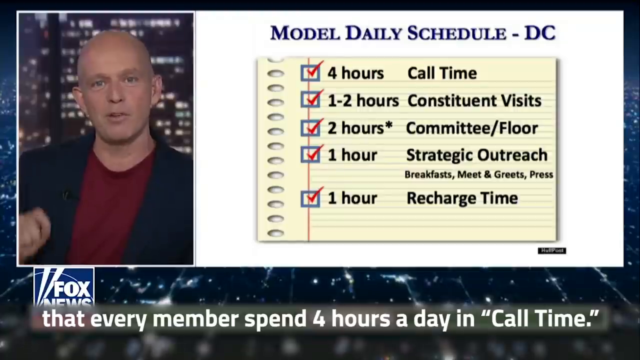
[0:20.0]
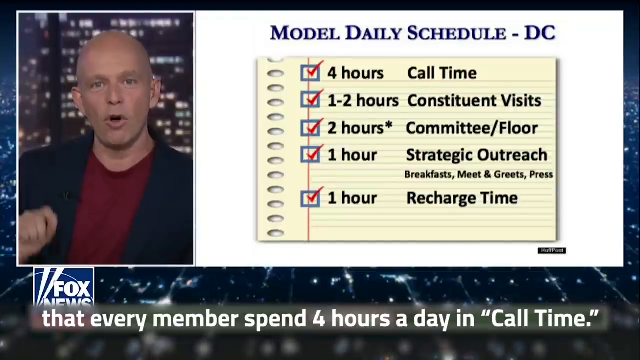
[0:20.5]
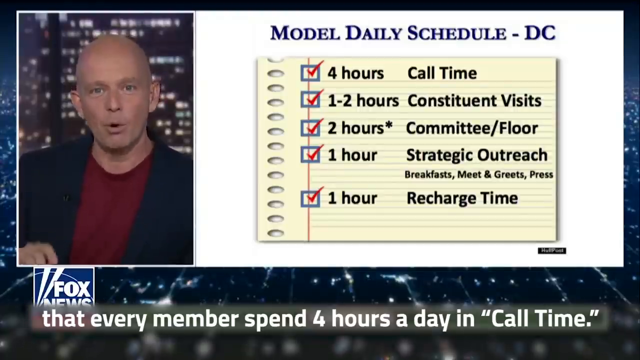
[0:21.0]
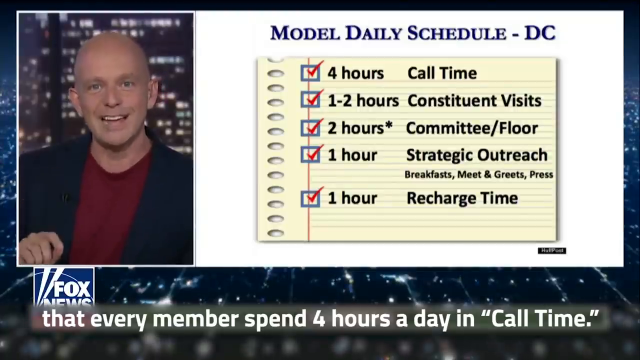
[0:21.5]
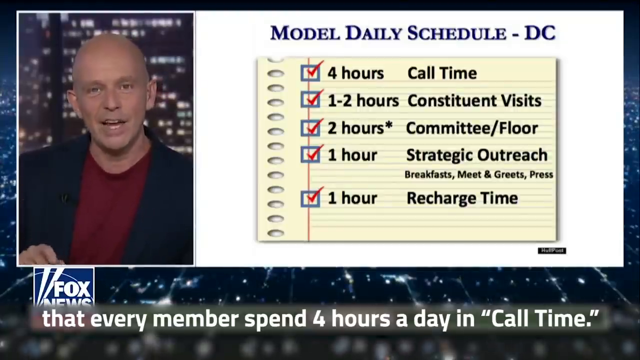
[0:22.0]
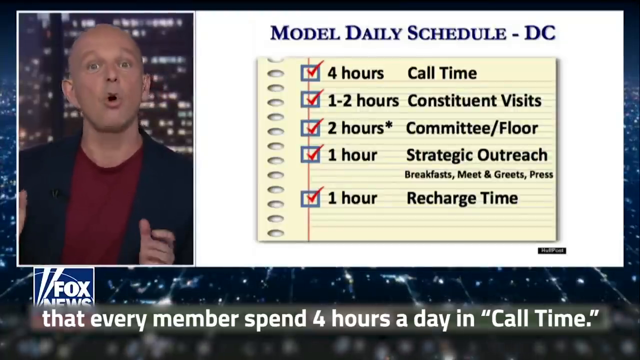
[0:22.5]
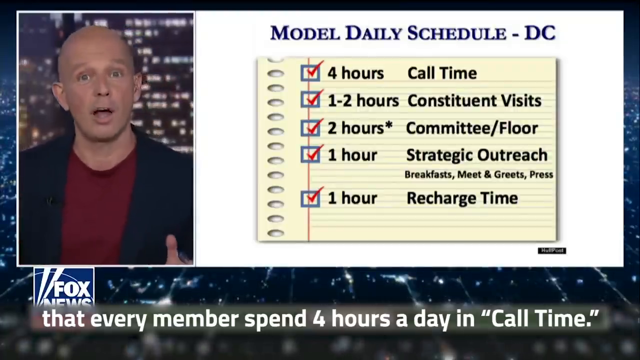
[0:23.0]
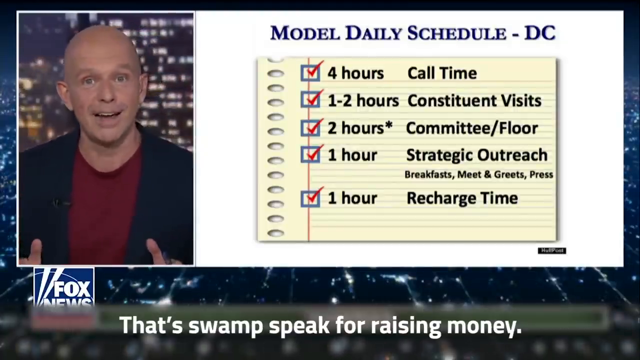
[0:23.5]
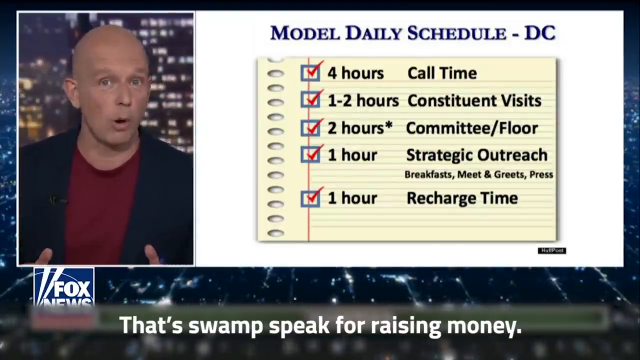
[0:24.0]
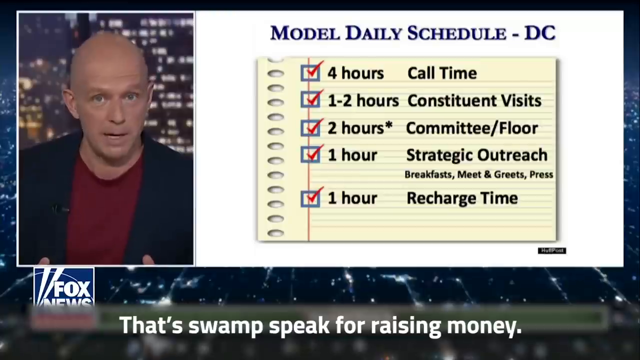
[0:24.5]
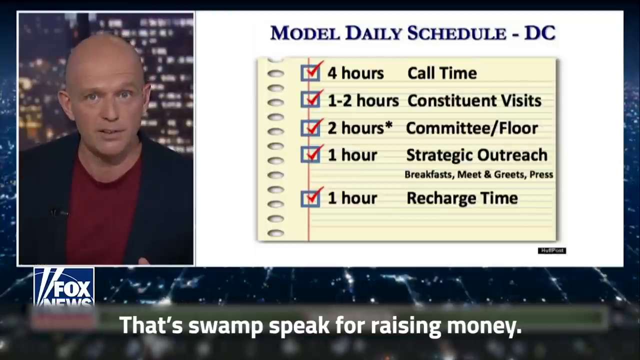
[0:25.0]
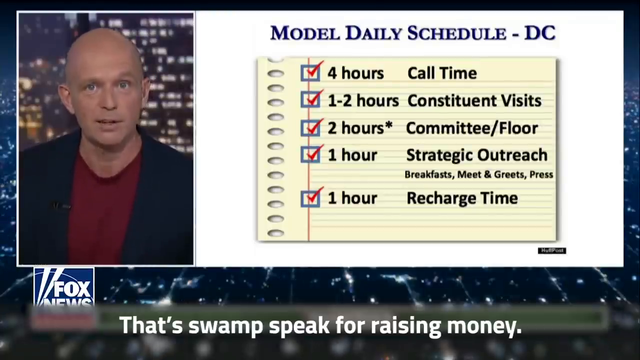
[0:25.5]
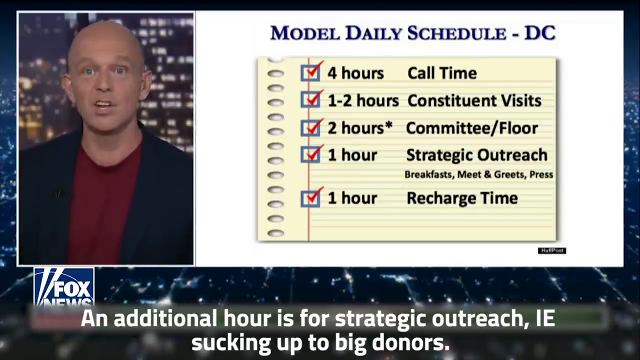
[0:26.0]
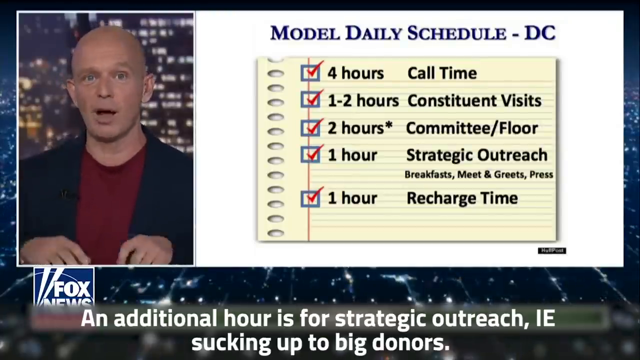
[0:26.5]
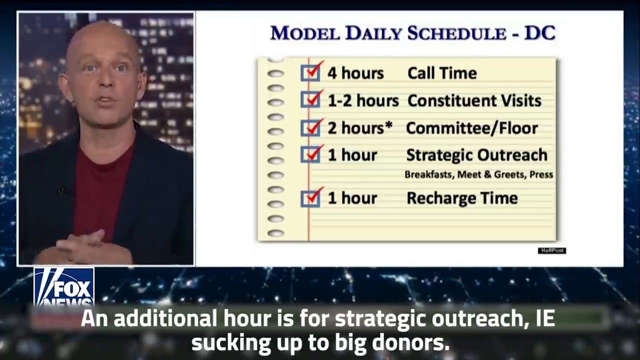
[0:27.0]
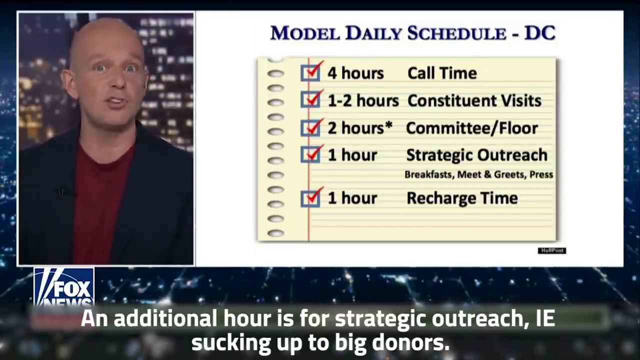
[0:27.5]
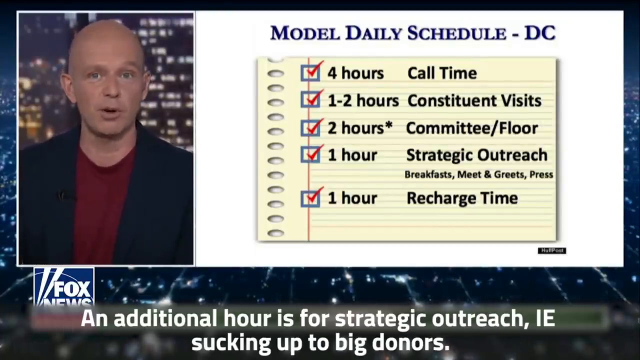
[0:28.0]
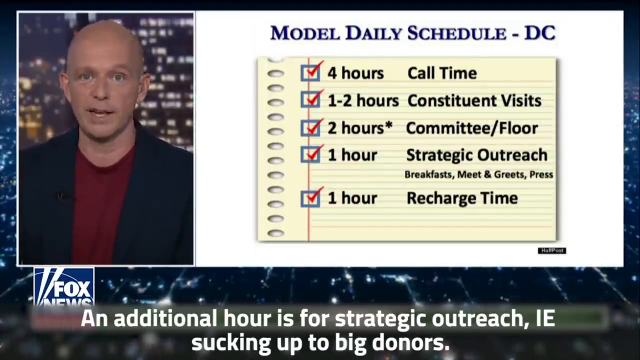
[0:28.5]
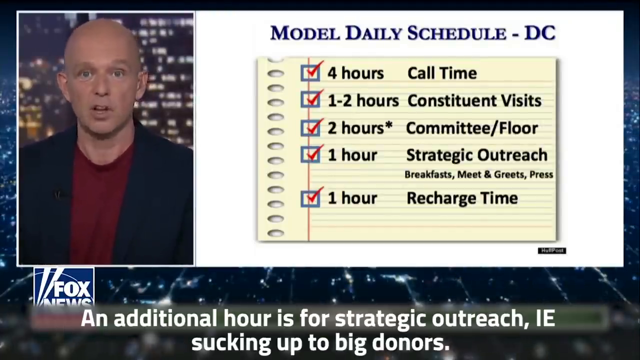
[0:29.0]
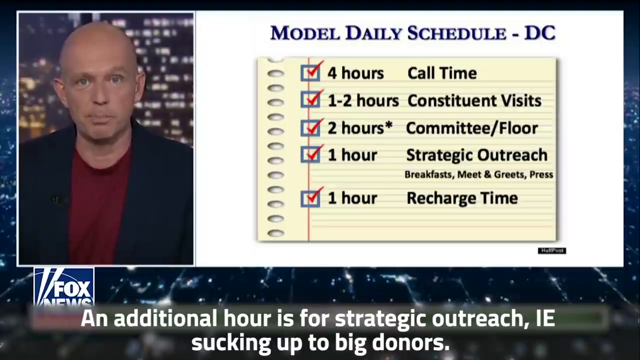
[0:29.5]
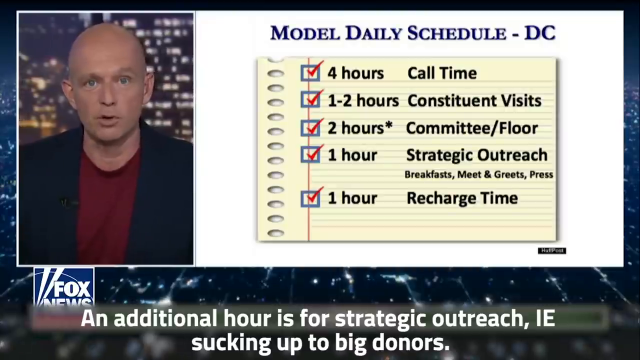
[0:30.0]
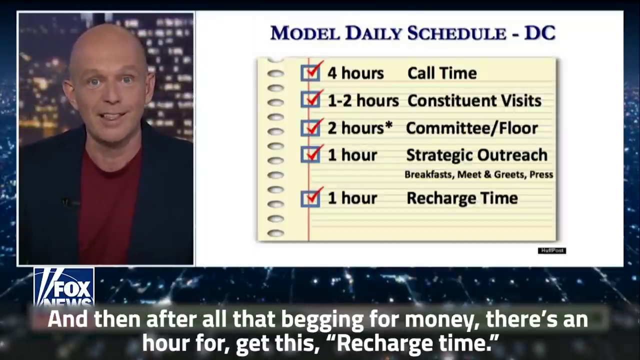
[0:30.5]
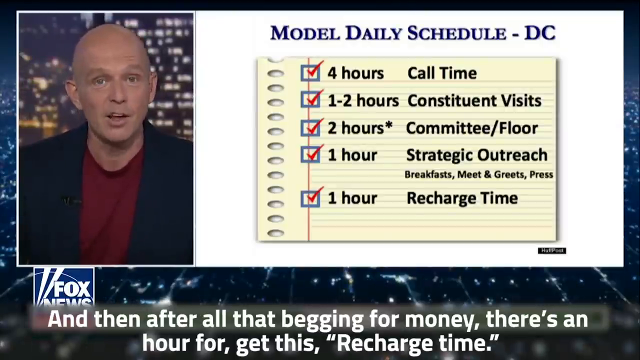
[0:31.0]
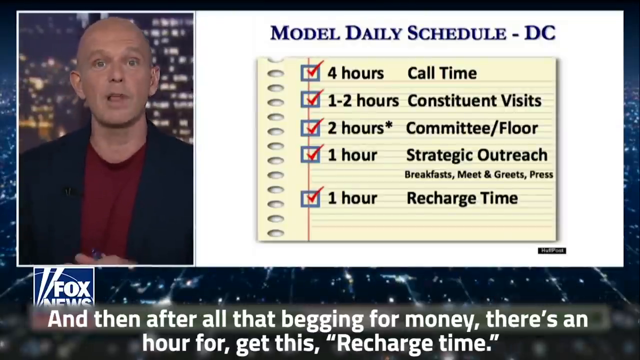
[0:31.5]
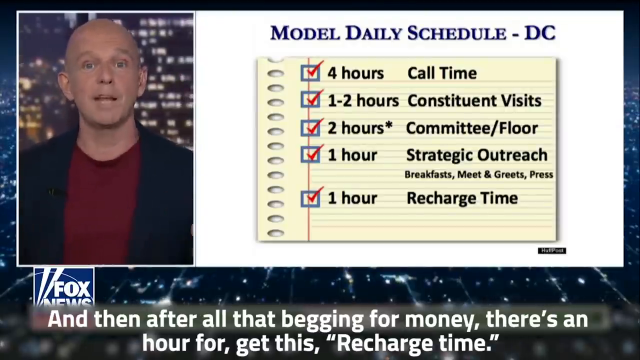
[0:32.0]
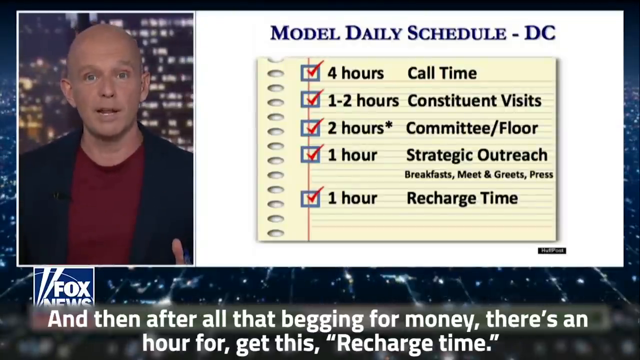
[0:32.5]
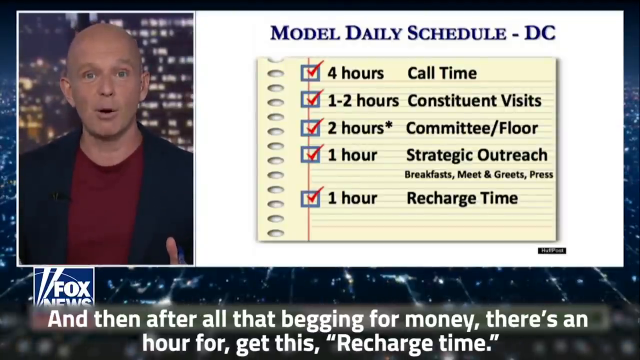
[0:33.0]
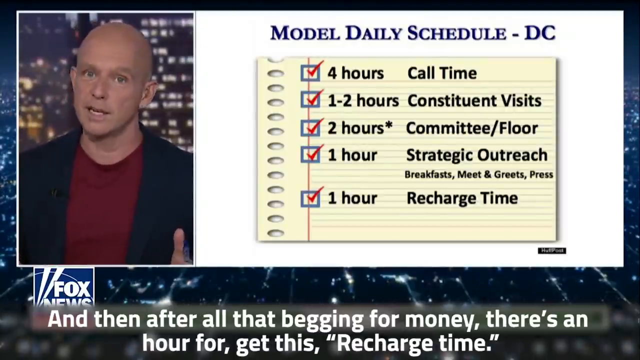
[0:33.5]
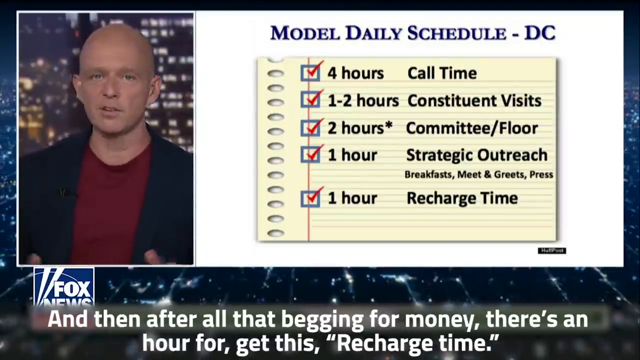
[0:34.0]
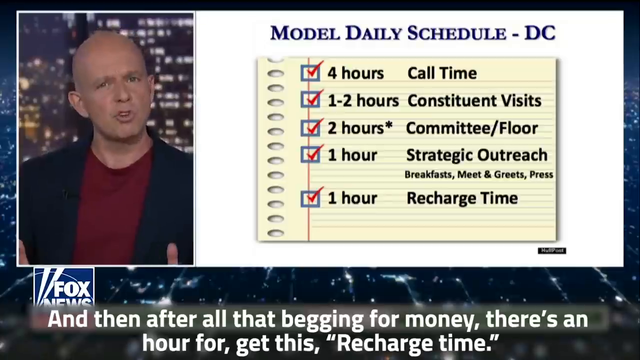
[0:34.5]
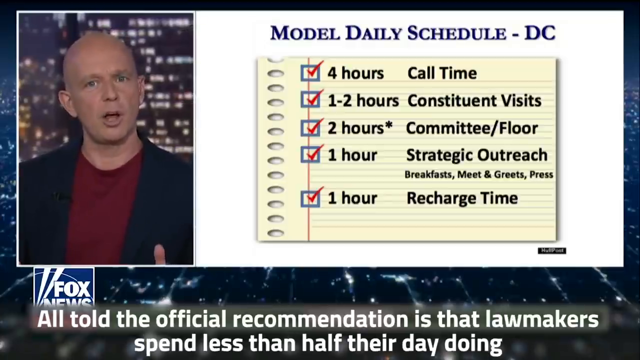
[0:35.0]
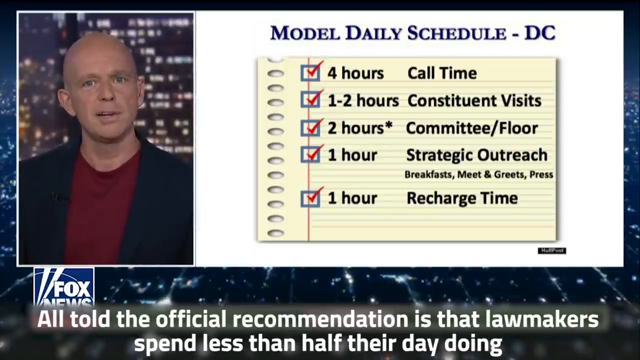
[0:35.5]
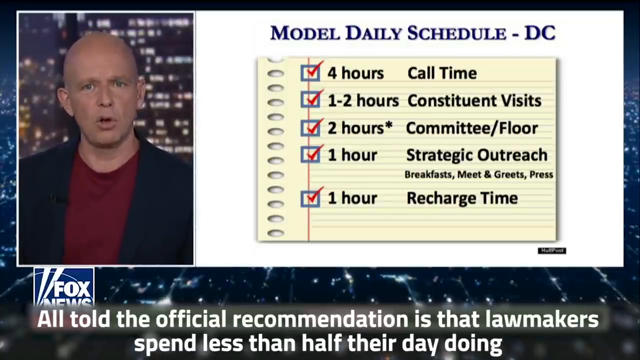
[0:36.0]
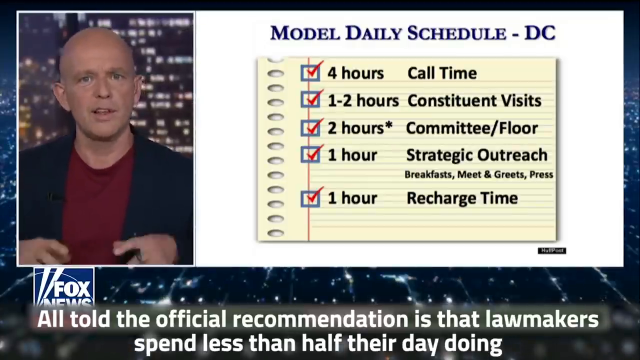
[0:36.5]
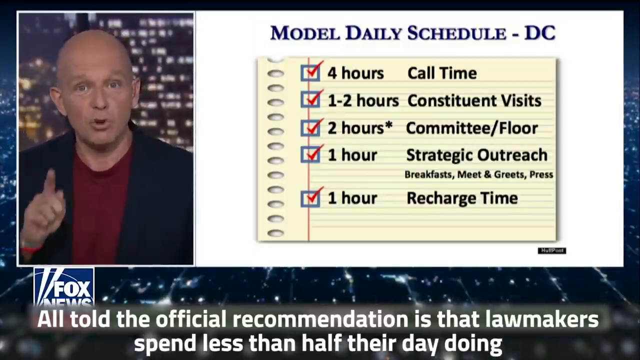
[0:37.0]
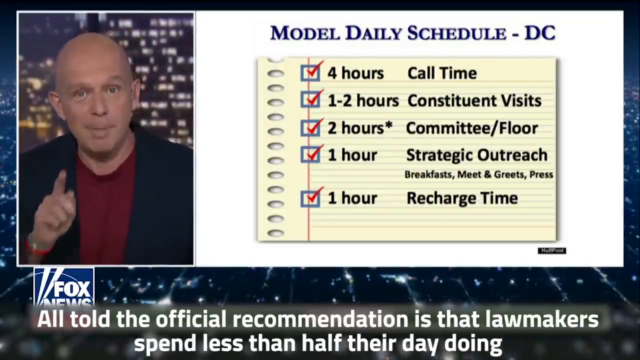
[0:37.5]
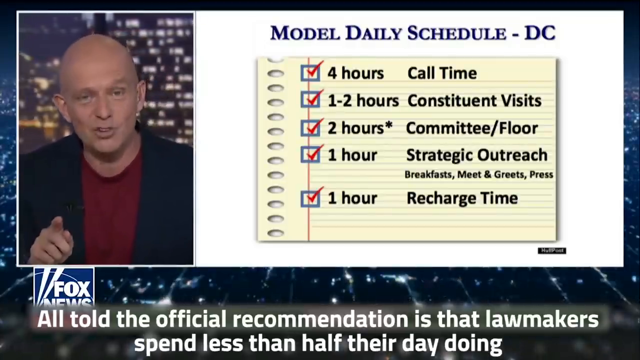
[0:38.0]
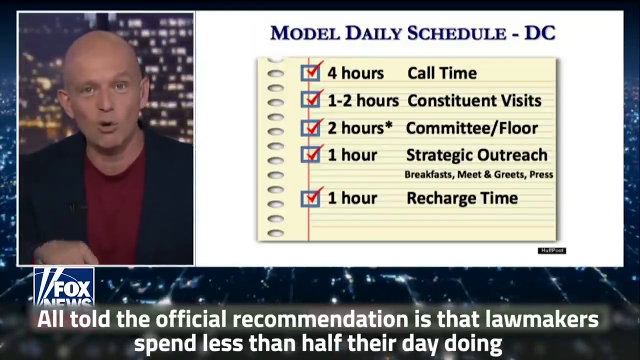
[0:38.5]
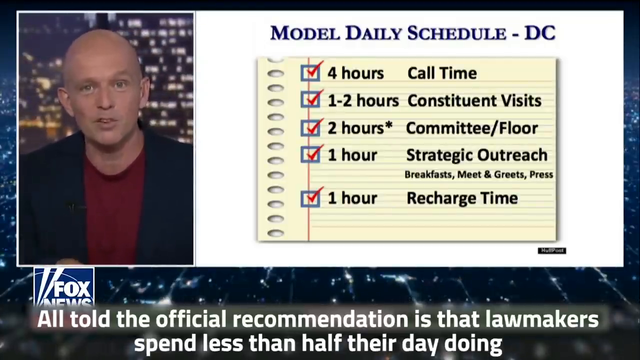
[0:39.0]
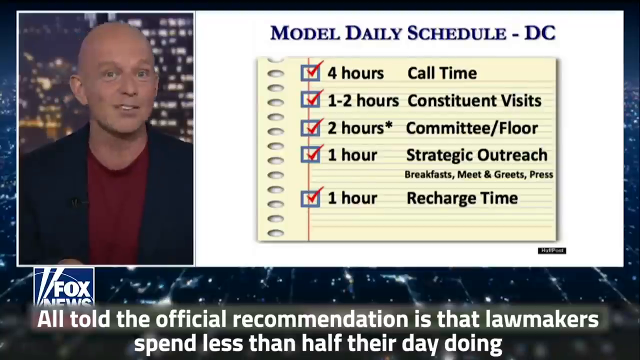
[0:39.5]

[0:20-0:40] The presenter reports for Fox News. The screen is divided into two: one part shows the presenter, and the other, on the right side, shows a model daily schedule for DC on a white background. It lists four hours of call time, one to two hours of constituent visits, two hours of committee floor, one hour of strategic outreach that includes breakfast, meet and greet, and press, and an hour of recharge time. Text appears on screen reading "We elect members of Congress to represent our interest, but they spend most of their time and our money on their interest. That is not some populist slogan," followed by text about a leaked PowerPoint slide from the 2013 congressional orientation and every member spending four hours of call time plus an additional hour of strategic outreach, "sucking up" to big donors, and then recharge time.